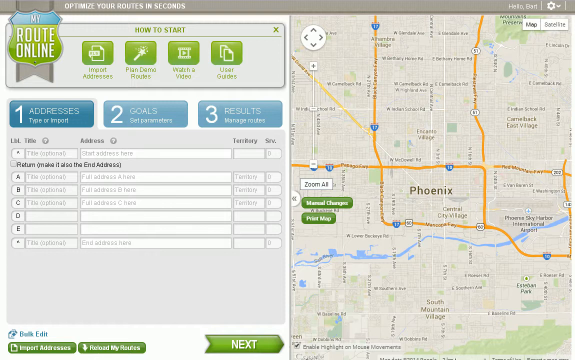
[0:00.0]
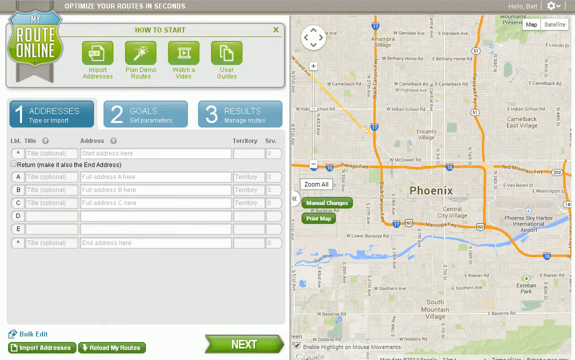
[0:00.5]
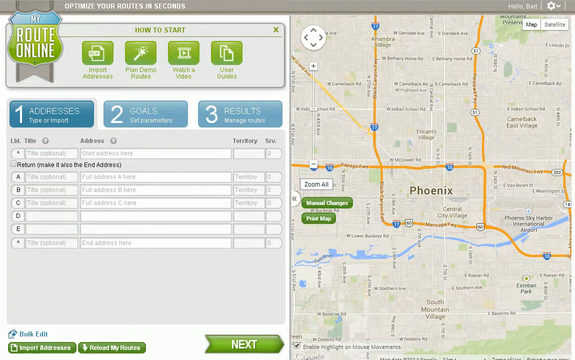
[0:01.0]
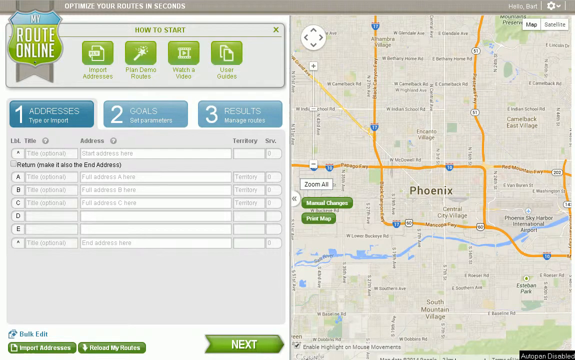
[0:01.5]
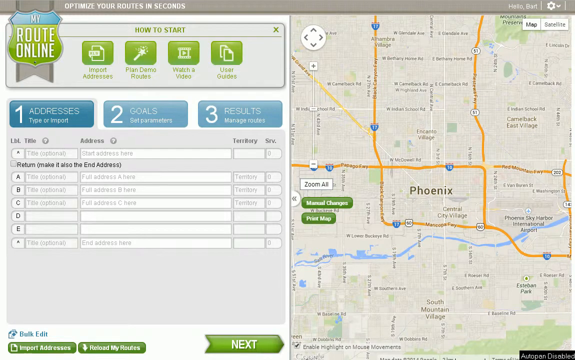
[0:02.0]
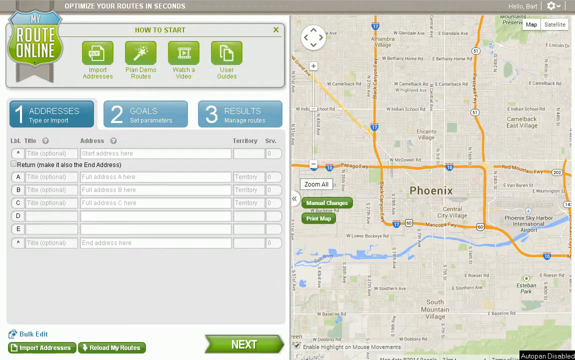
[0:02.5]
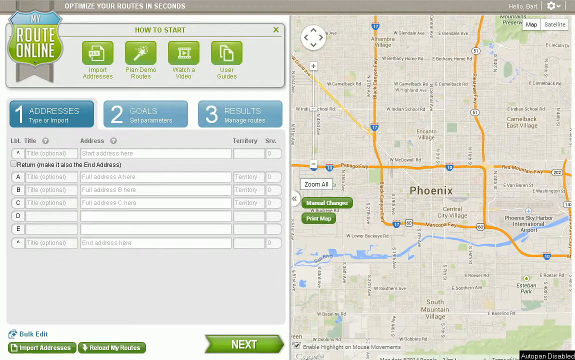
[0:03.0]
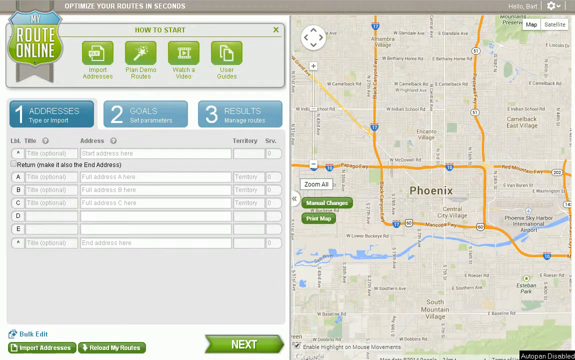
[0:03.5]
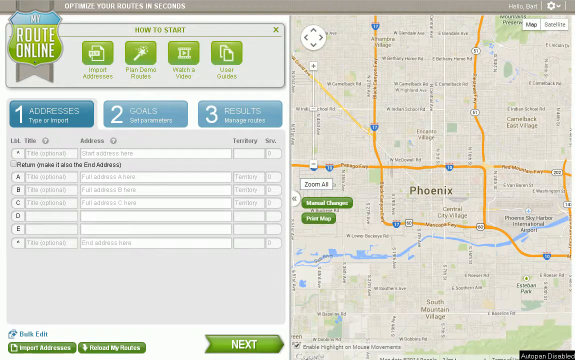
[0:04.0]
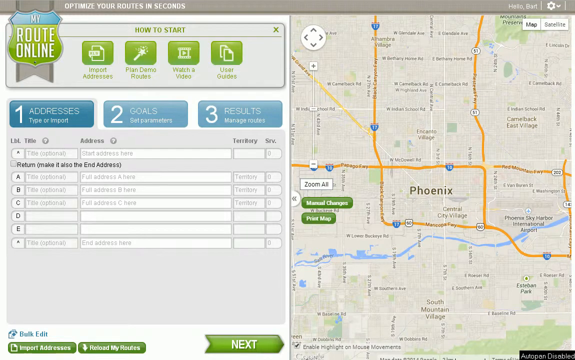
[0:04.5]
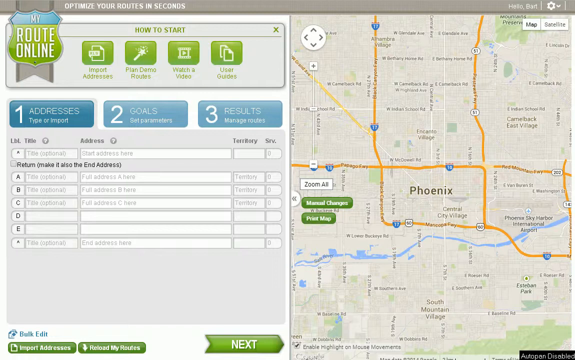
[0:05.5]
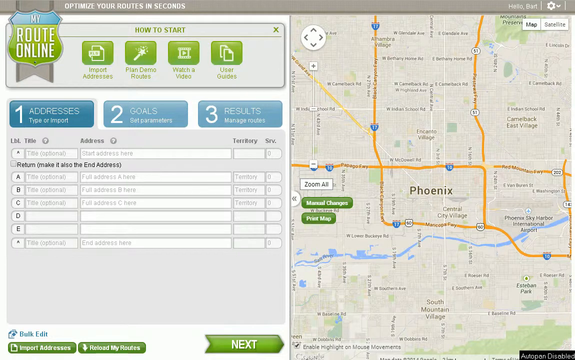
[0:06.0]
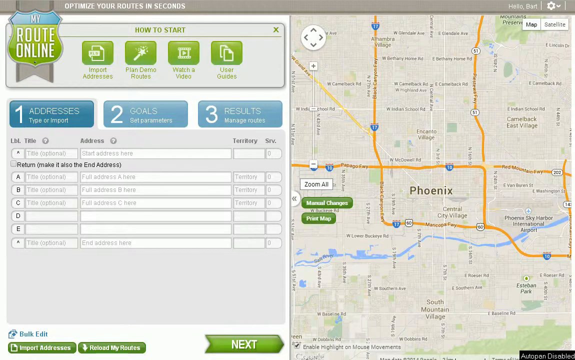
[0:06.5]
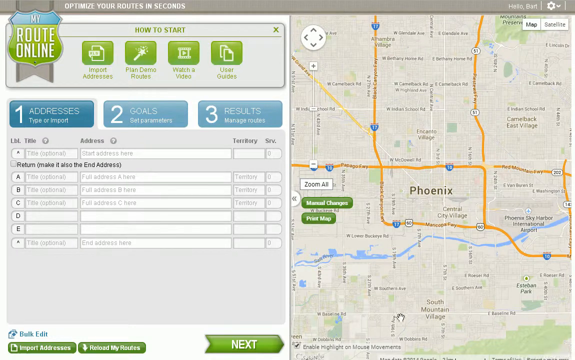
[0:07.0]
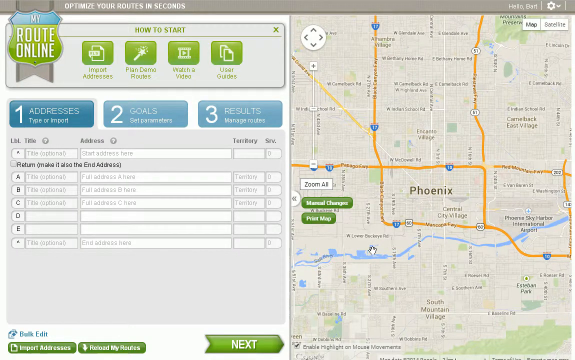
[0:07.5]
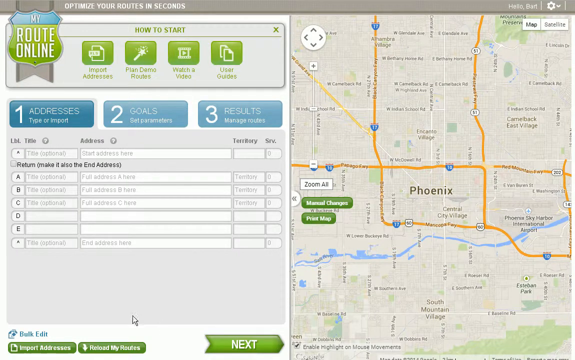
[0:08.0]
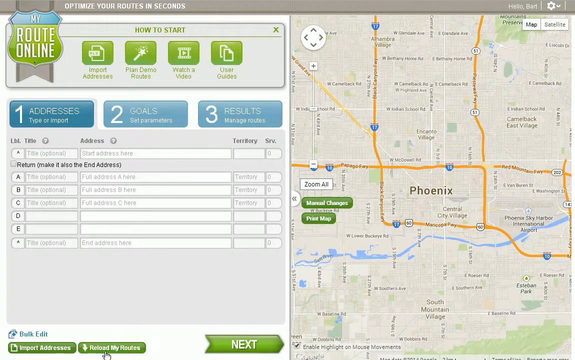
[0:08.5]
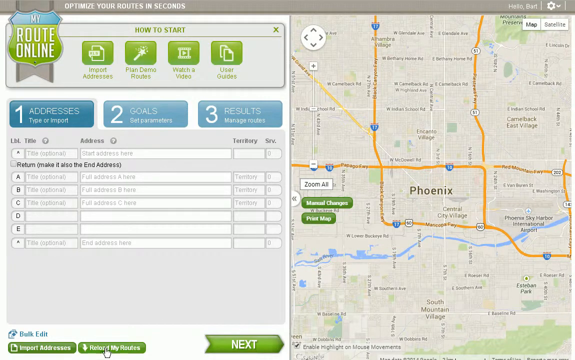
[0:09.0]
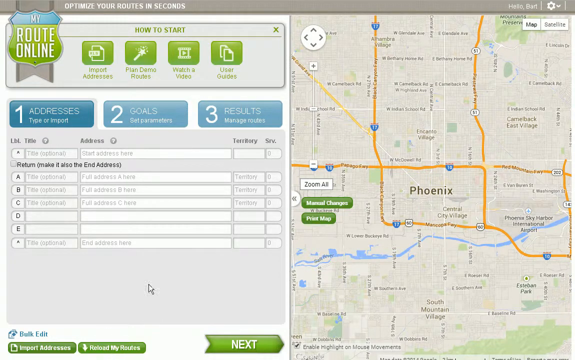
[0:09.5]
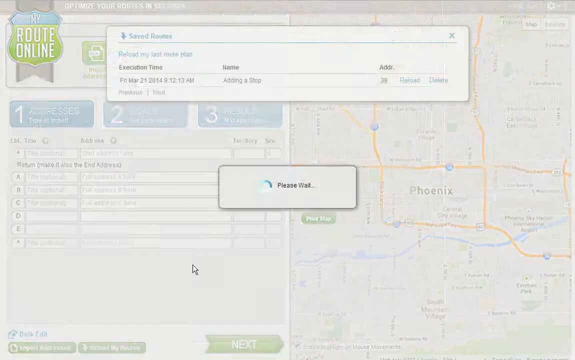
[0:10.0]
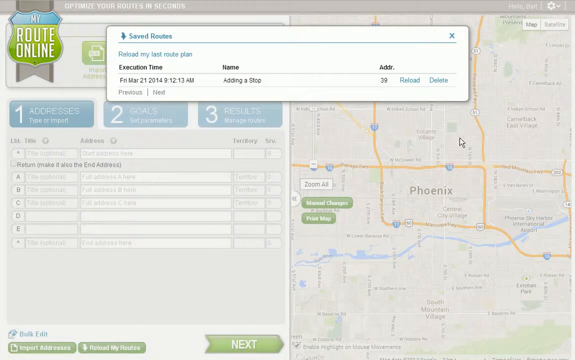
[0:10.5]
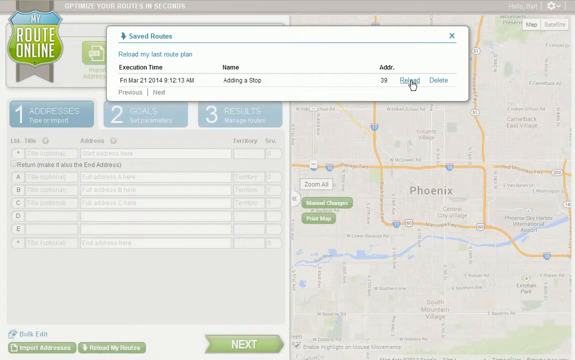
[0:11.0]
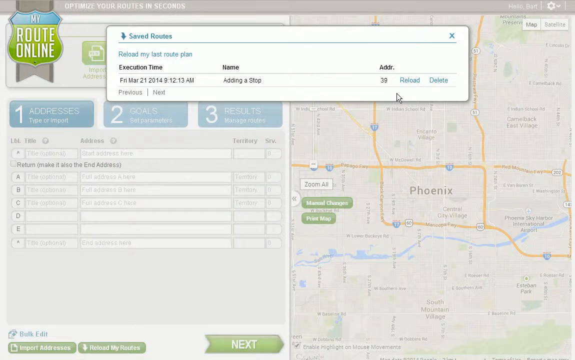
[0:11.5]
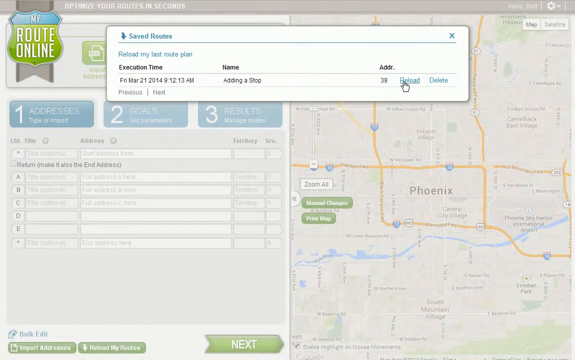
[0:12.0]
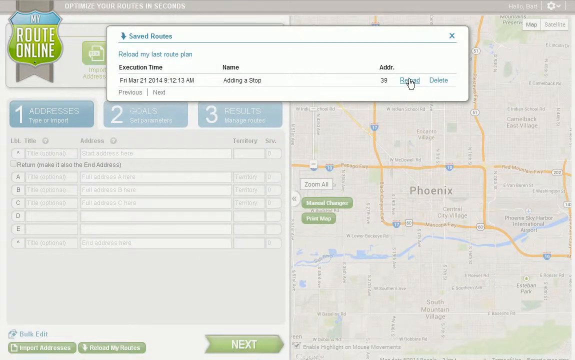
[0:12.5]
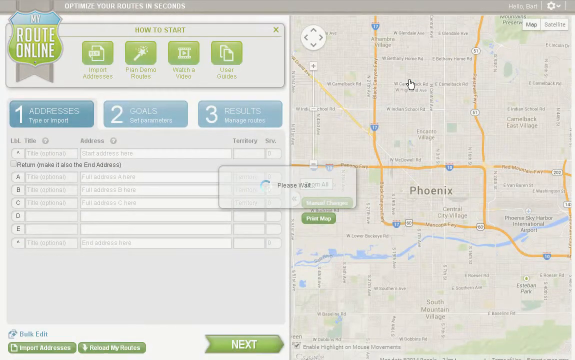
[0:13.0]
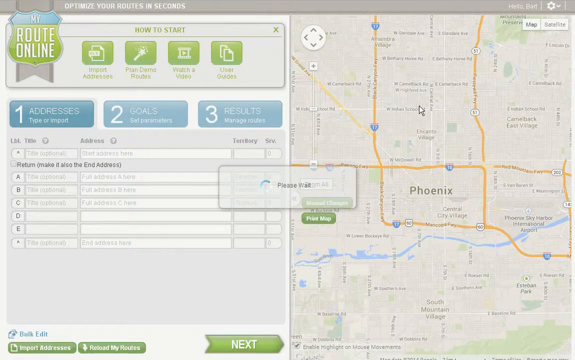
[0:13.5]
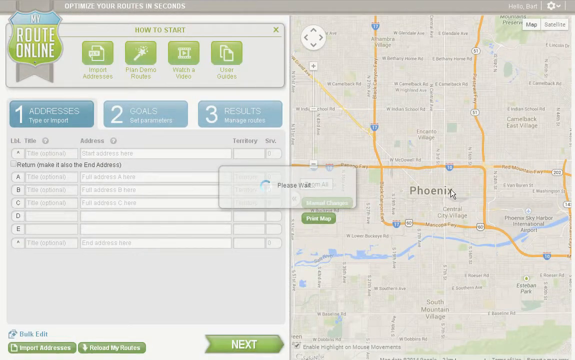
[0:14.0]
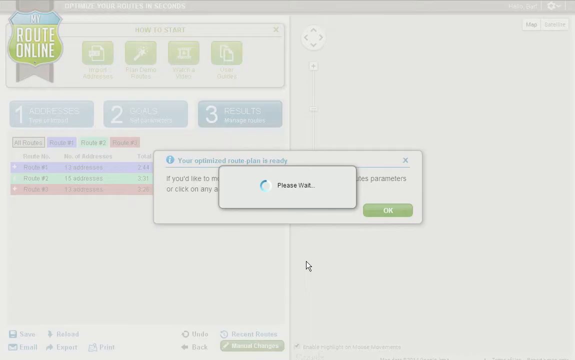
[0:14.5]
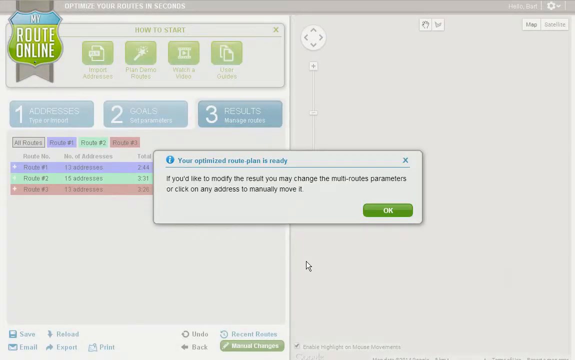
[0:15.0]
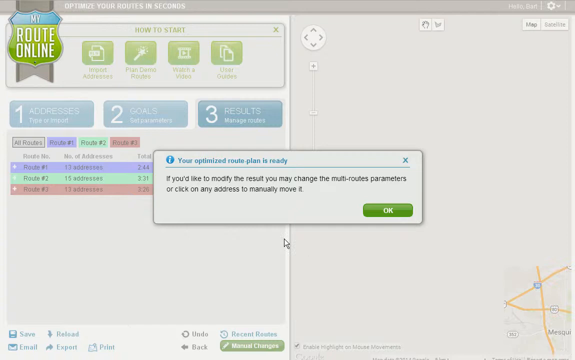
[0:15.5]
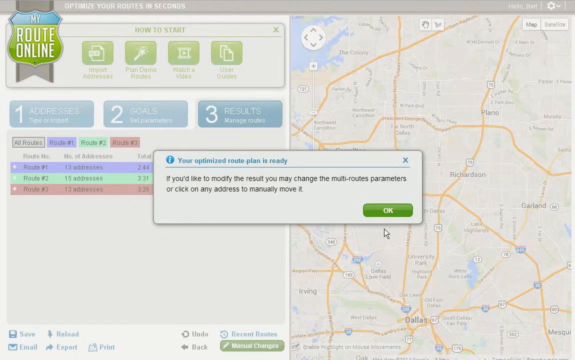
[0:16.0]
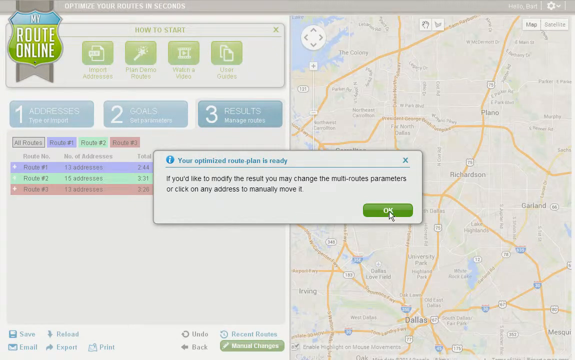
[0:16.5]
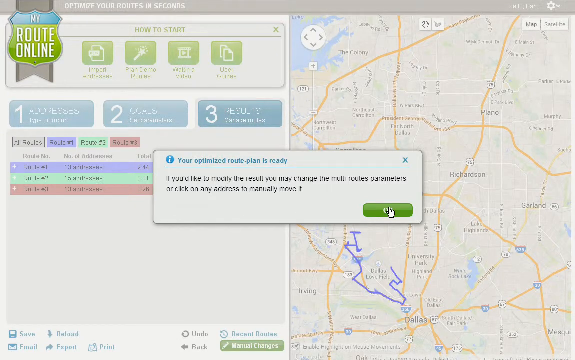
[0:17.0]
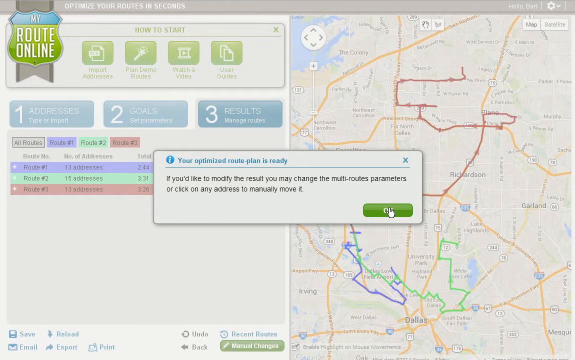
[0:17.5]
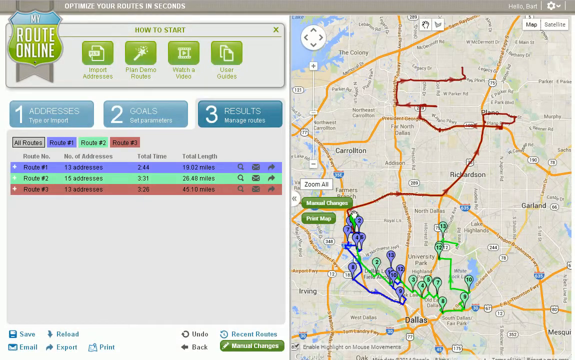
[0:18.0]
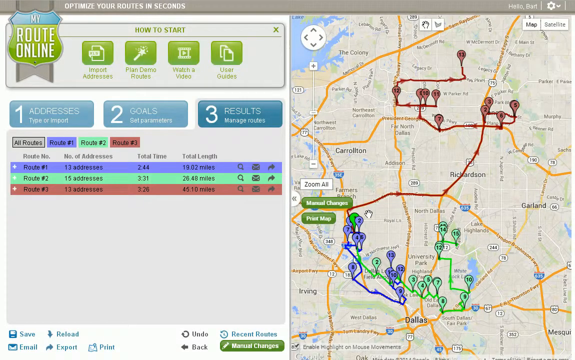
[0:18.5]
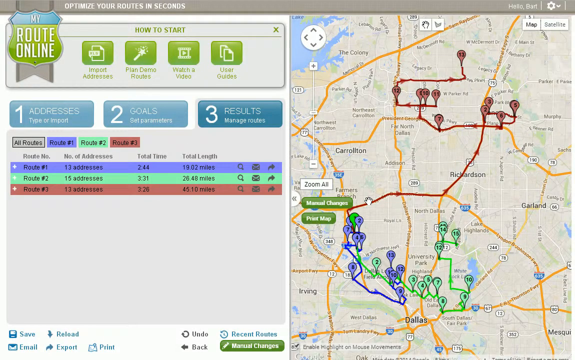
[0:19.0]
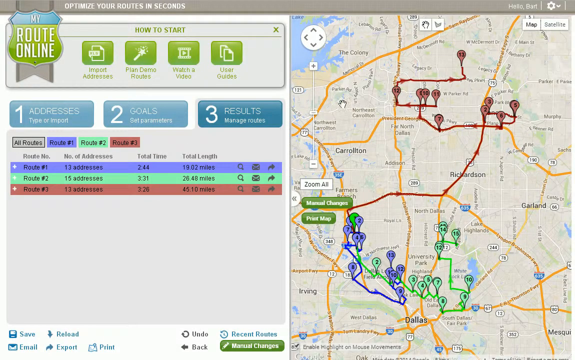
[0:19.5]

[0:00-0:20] The video shows software called MyRouteOnline, which appears to be used for creating routes and making the best routes possible. At first there is nothing on the screen other than the map and a box on the left where addresses are entered to create routes. The person presses to reload the routes, and three different routes appear on the map: one in red, one in green and one in blue. The three routes also appear in the table on the left-hand side, with colors that match the routes on the map. The video seemingly shows how to use the software to create more efficient routes.